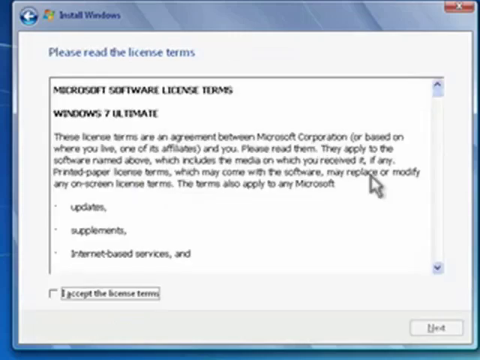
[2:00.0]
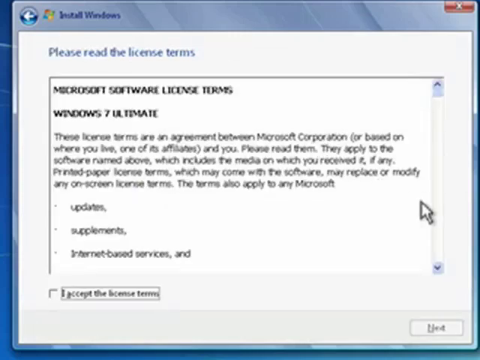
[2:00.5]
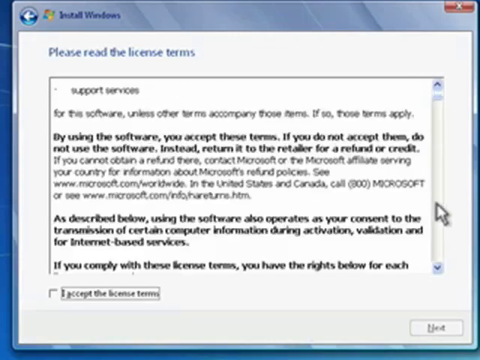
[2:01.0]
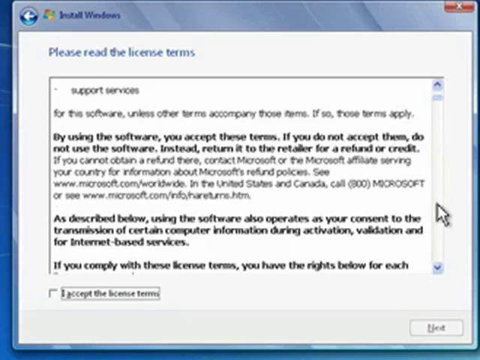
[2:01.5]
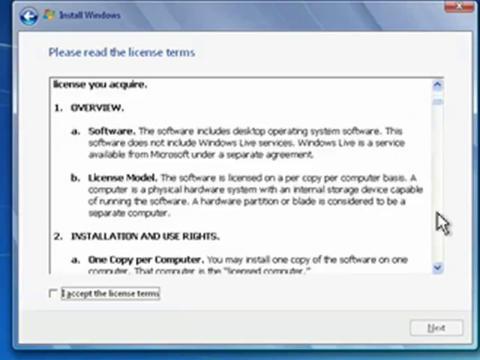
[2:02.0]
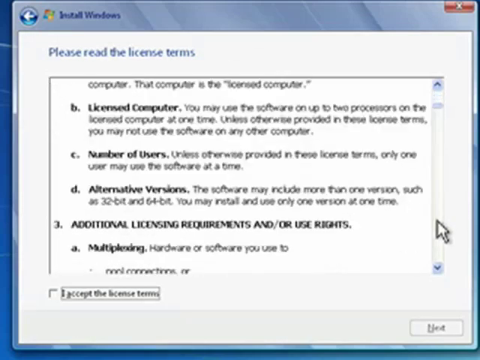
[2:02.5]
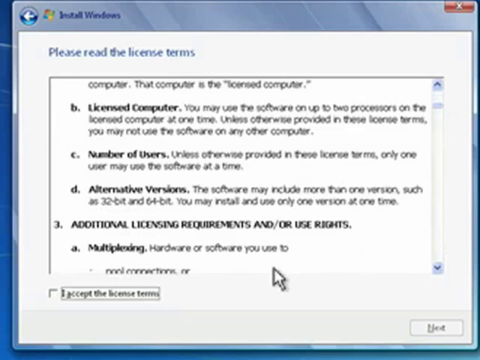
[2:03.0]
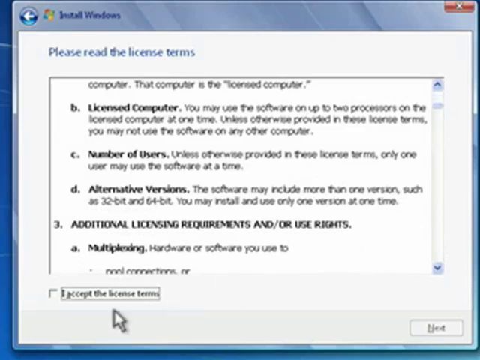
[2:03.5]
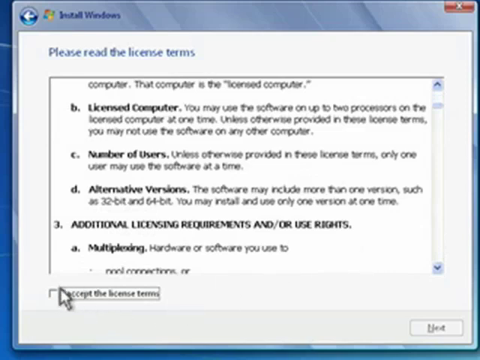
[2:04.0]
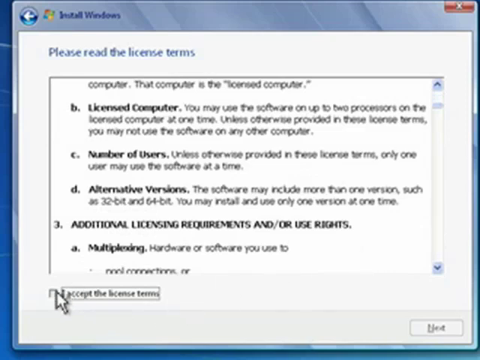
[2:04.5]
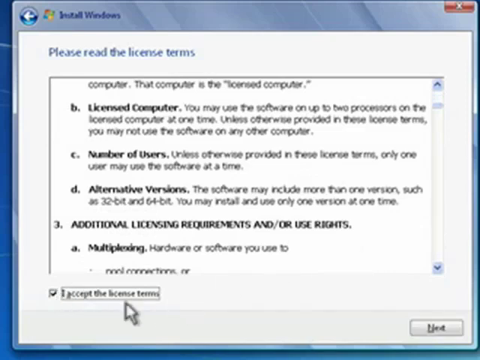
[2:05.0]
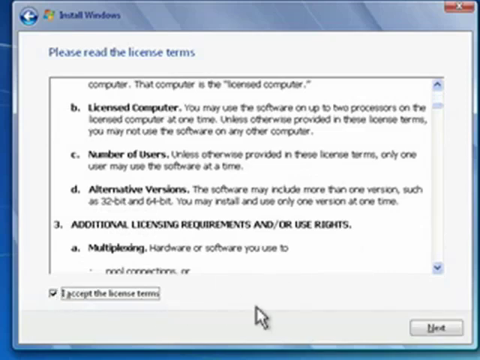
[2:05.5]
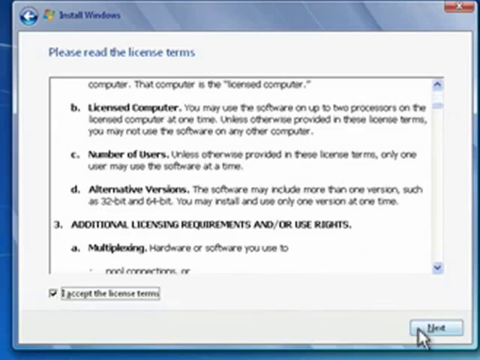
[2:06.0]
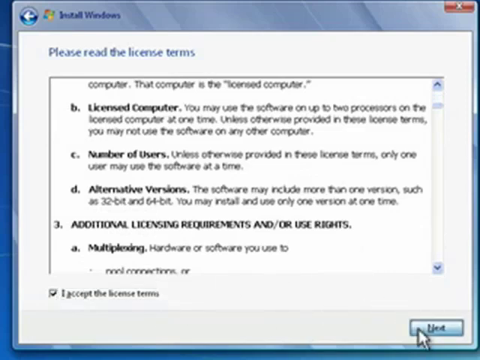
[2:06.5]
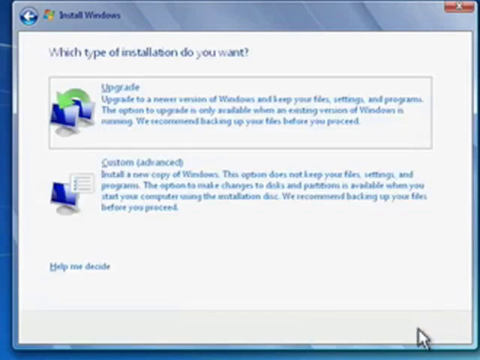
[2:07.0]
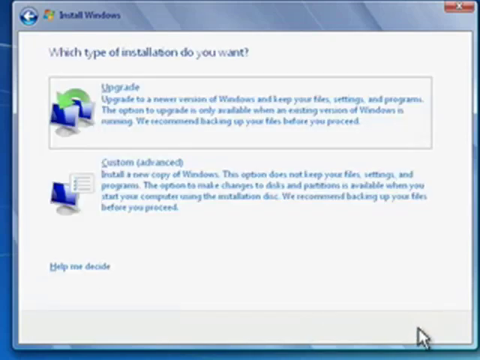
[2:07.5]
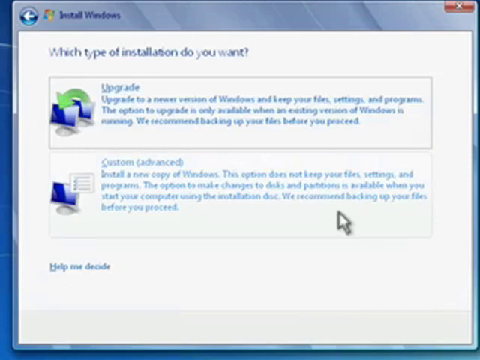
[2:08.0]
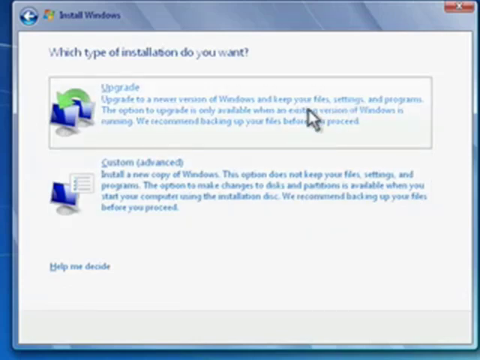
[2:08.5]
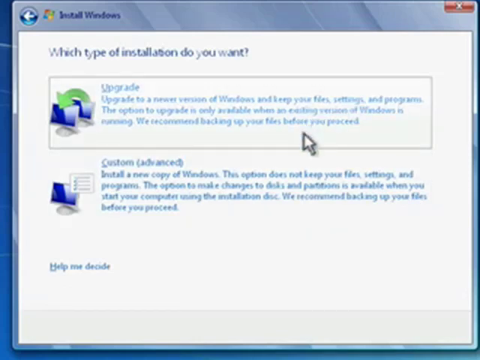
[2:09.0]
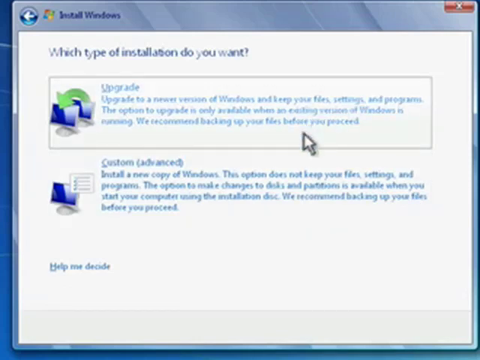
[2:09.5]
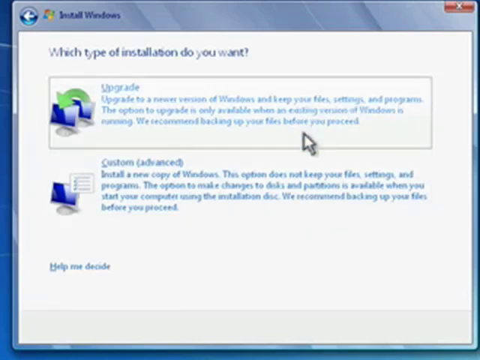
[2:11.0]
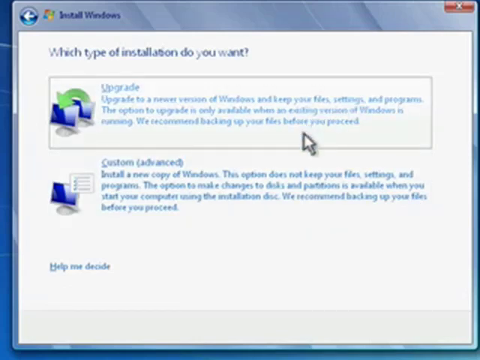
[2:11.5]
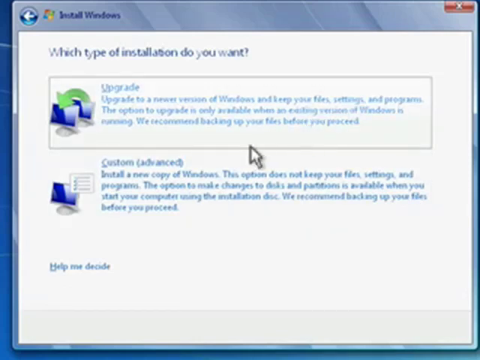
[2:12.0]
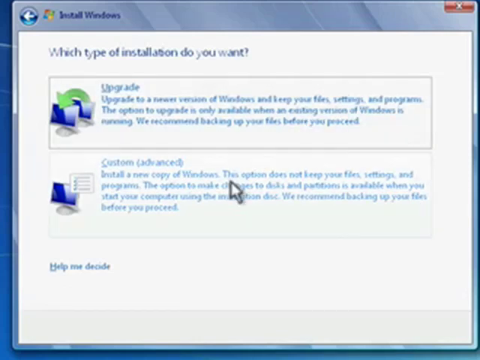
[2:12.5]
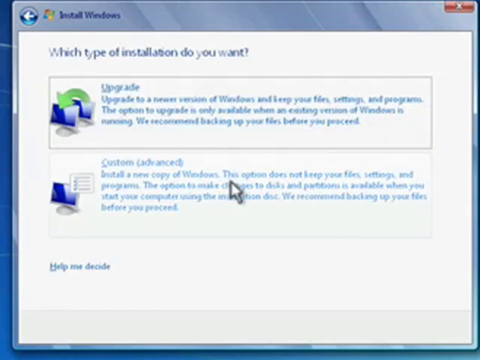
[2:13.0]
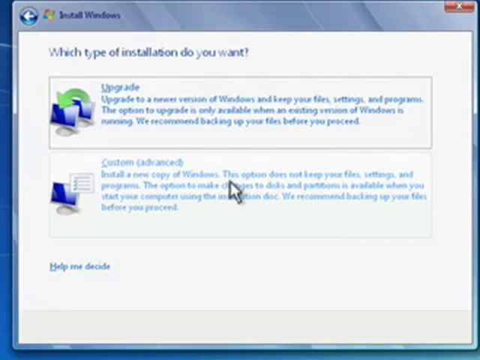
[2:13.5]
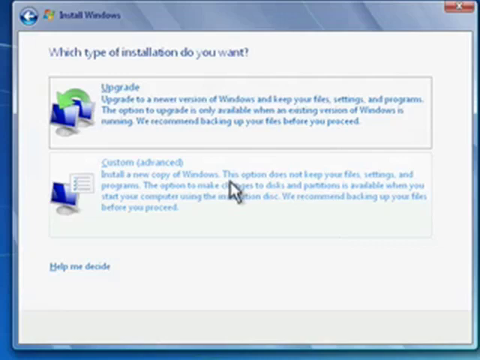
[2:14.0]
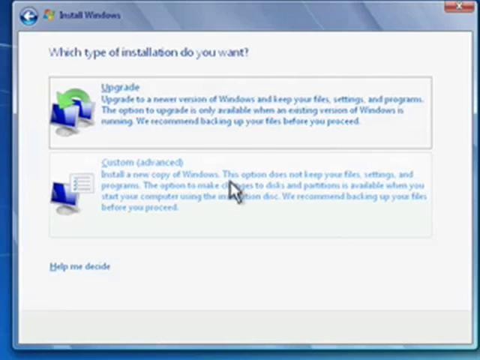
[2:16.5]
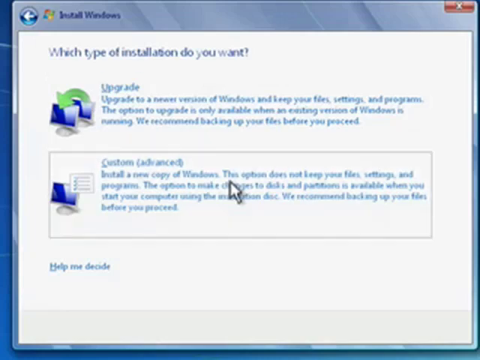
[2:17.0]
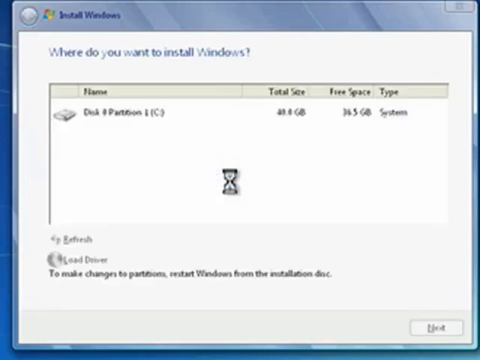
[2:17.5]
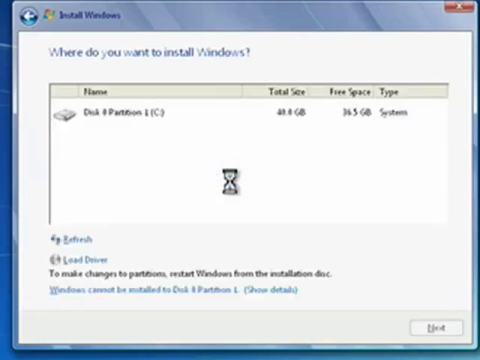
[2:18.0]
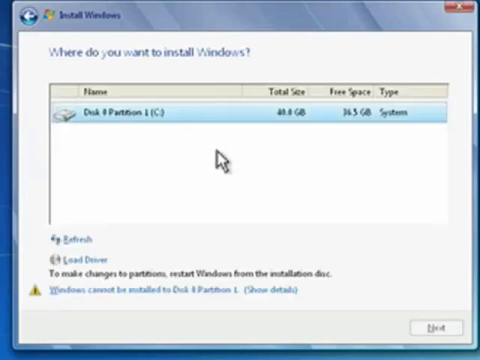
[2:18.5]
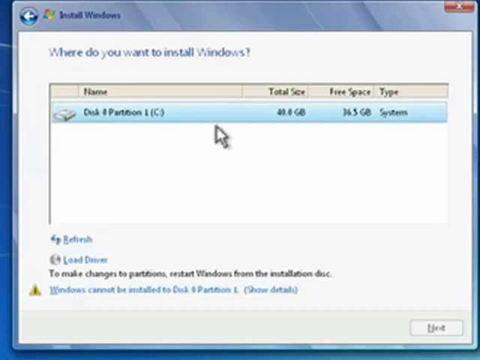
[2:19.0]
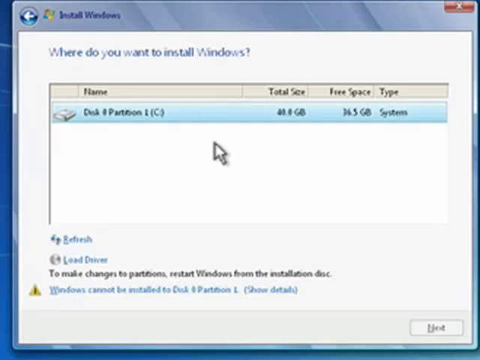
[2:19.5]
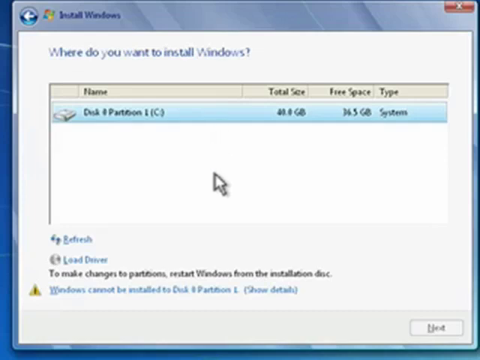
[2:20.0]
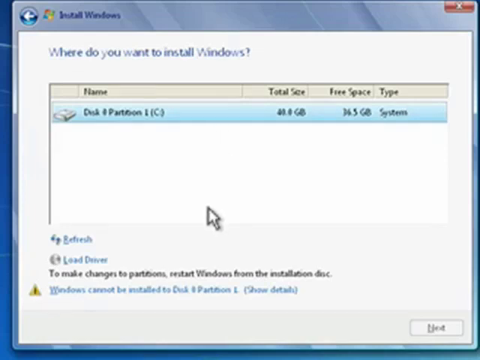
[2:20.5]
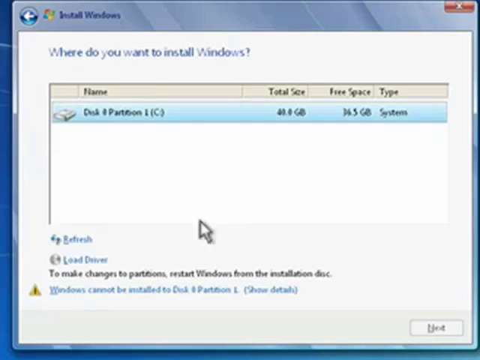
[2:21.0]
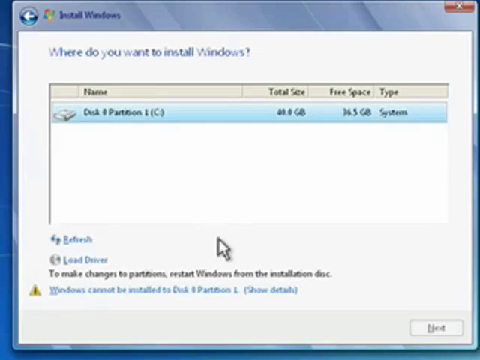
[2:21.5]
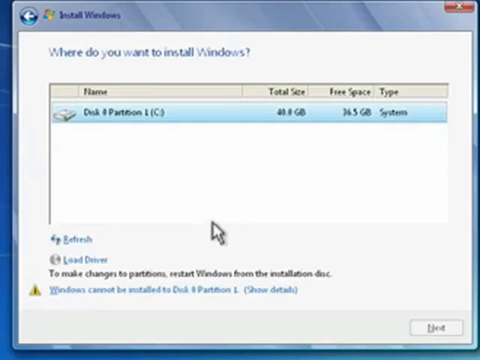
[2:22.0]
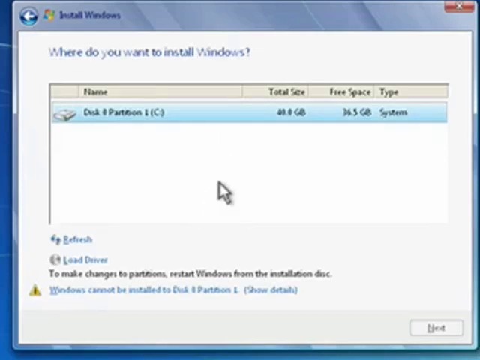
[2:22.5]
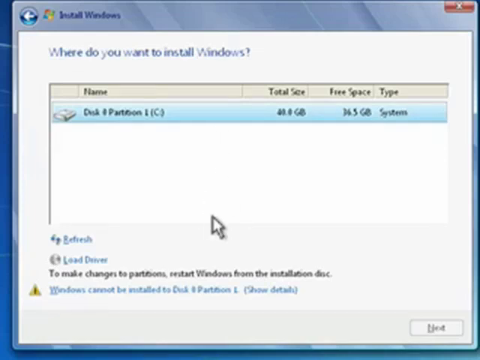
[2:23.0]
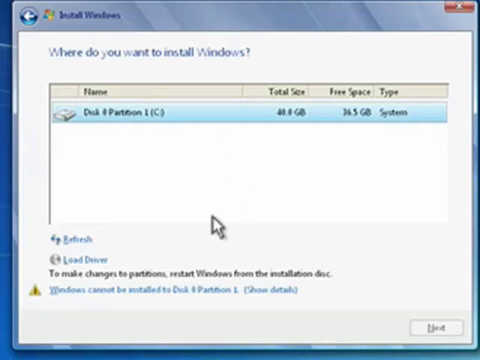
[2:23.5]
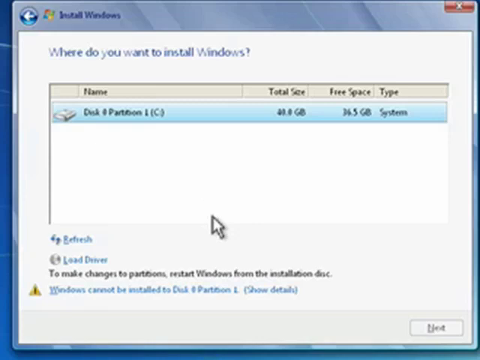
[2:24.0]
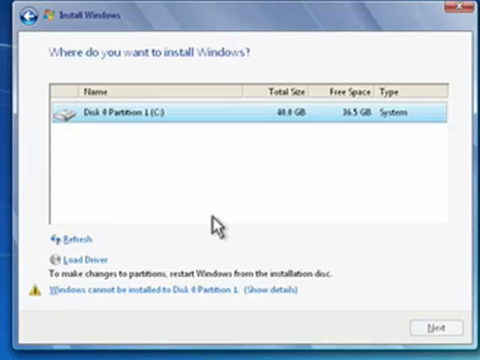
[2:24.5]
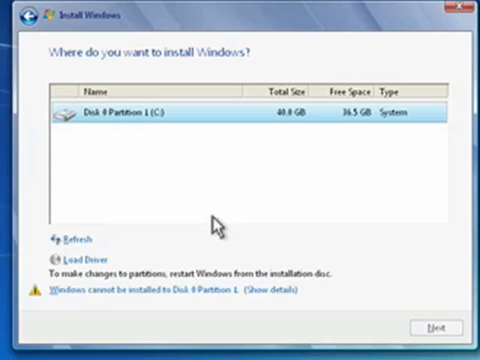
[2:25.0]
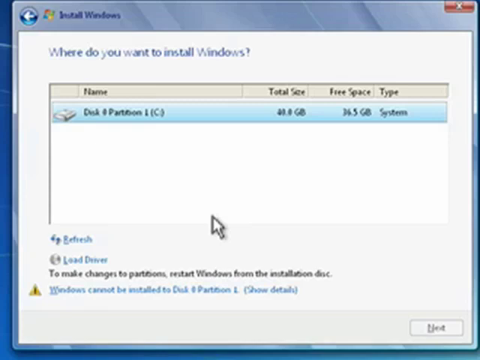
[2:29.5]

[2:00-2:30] As the Windows 7 installation continues, a box pops up that says "please read the license terms" and "Microsoft software license terms Windows 7 ultimate." The text begins "these license terms are an agreement between Microsoft Corporation or based on where you live one of its affiliates." The person scrolls down, showing many more paragraphs of terms, and clicks on "I accept the license agreement." Next there is an upgrade option and a custom (advanced) option; the person points at custom advanced and clicks on it. A screen says "where do you want to install Windows," with a box in the middle that says "disk and platform."